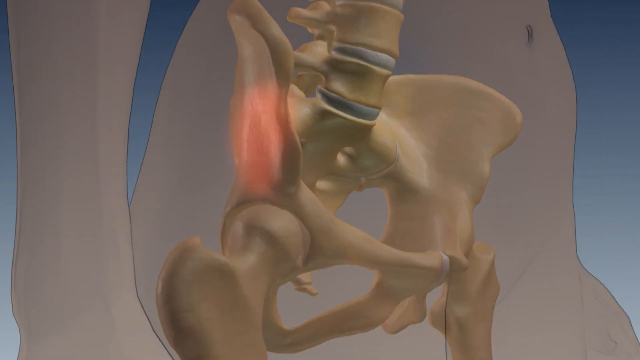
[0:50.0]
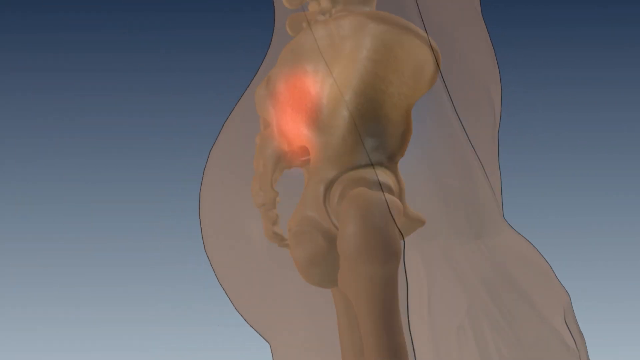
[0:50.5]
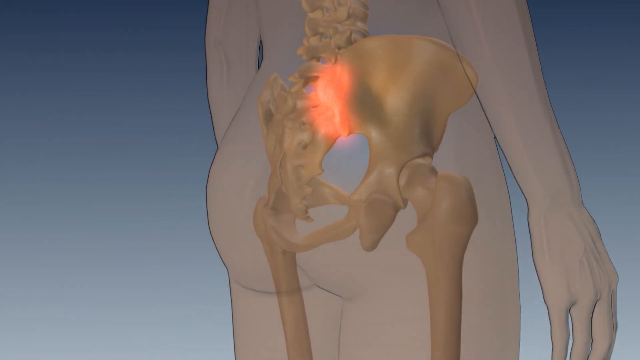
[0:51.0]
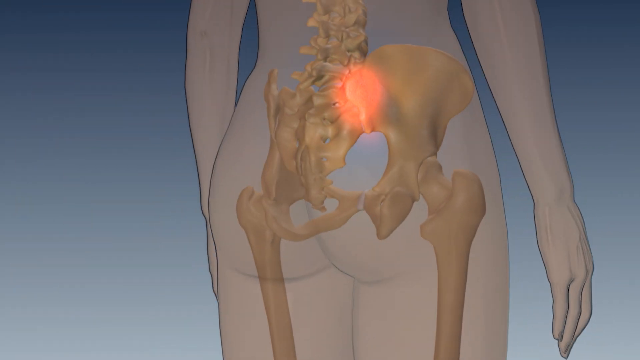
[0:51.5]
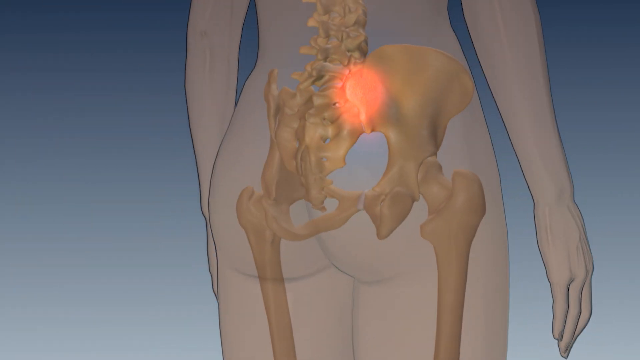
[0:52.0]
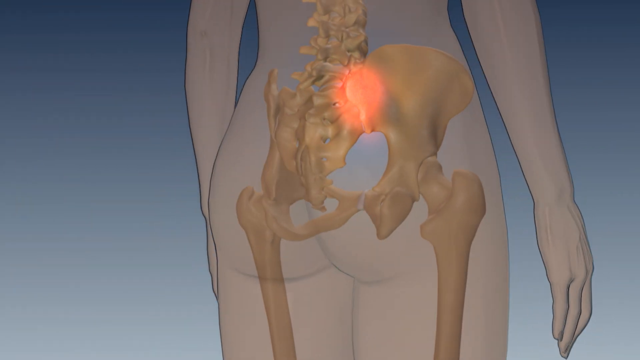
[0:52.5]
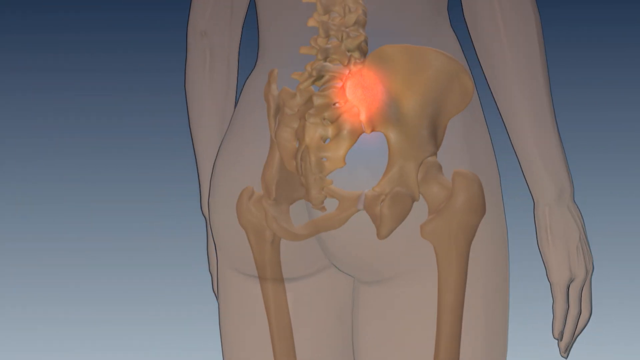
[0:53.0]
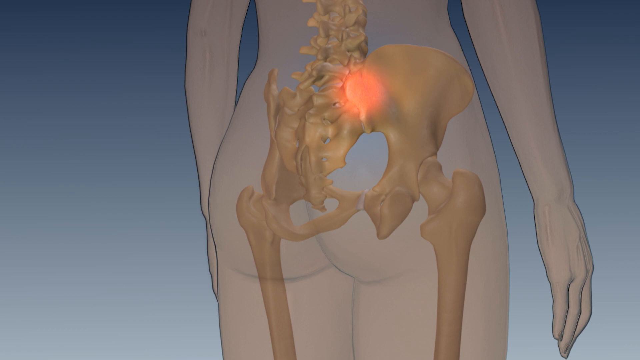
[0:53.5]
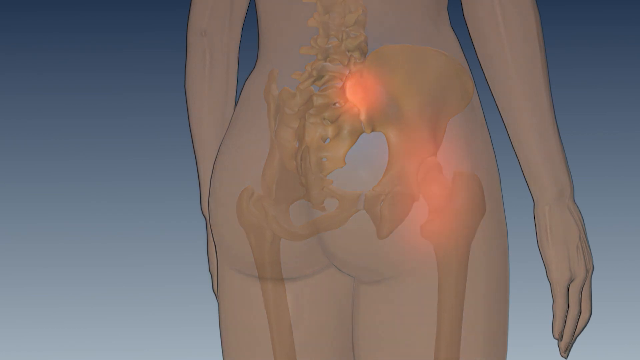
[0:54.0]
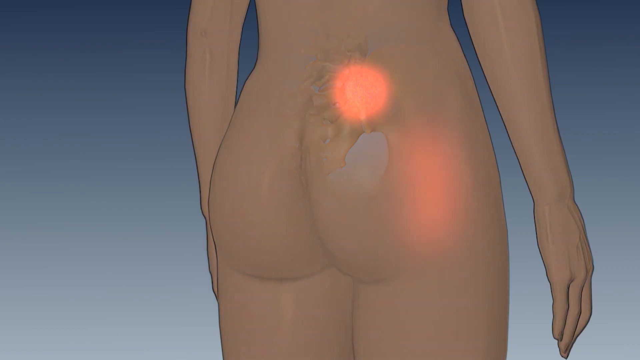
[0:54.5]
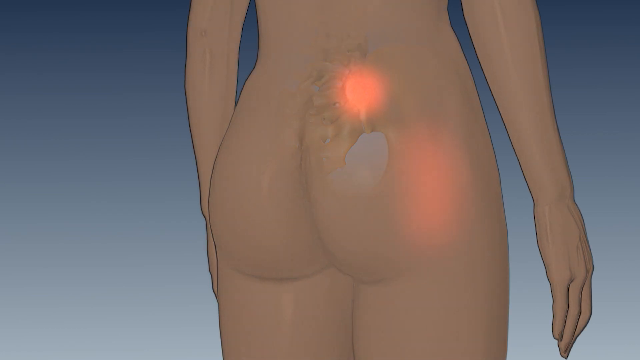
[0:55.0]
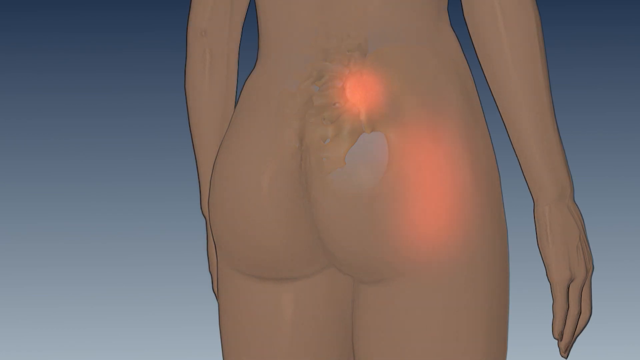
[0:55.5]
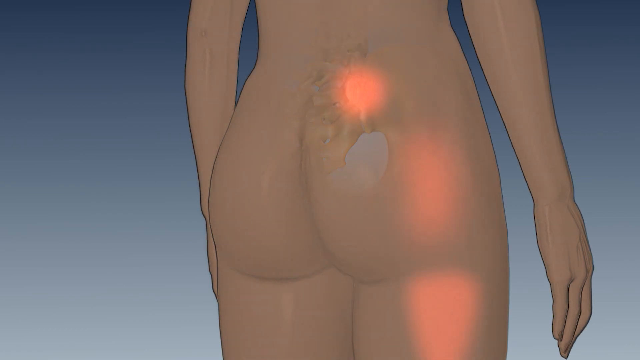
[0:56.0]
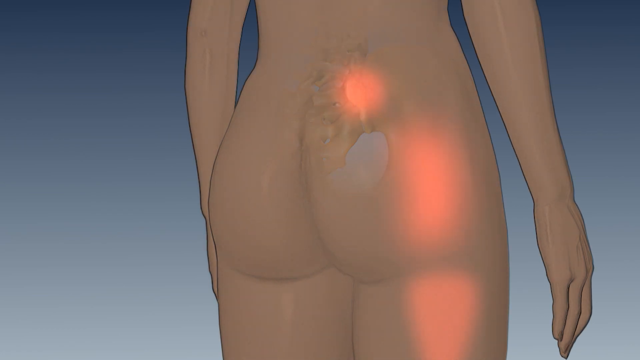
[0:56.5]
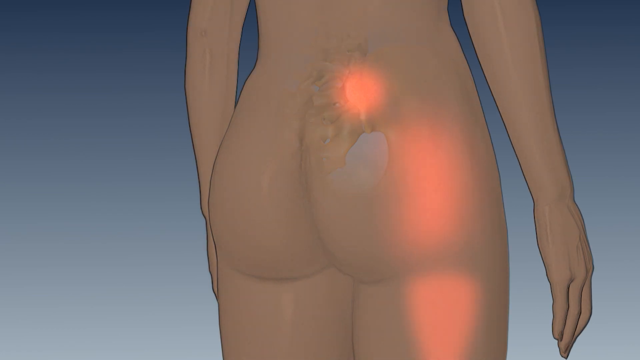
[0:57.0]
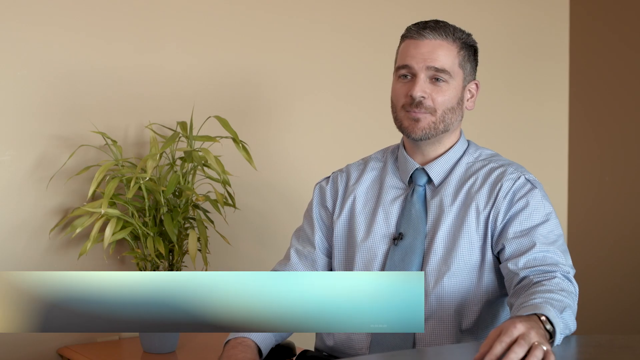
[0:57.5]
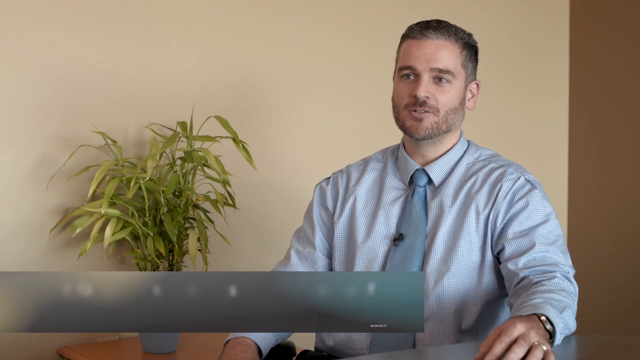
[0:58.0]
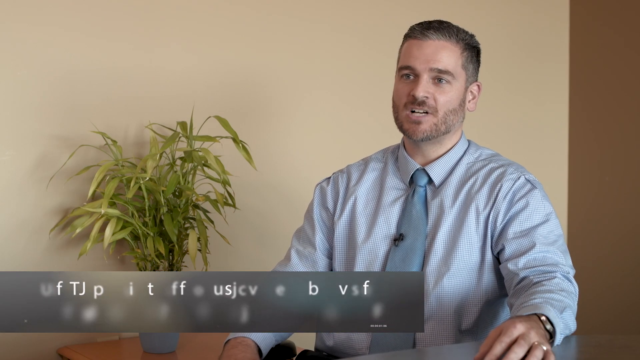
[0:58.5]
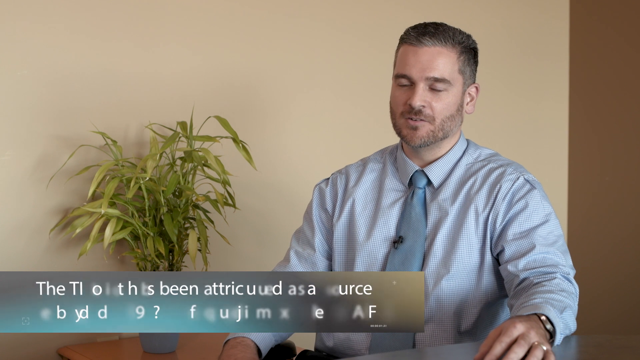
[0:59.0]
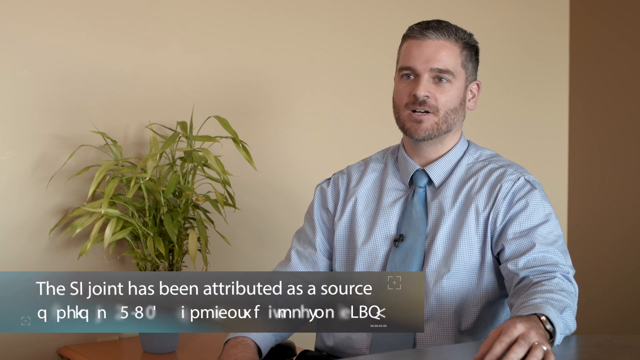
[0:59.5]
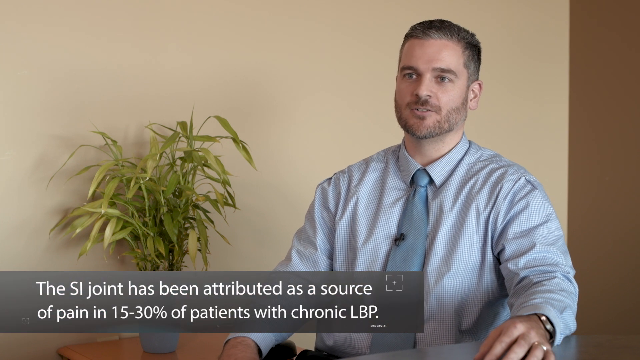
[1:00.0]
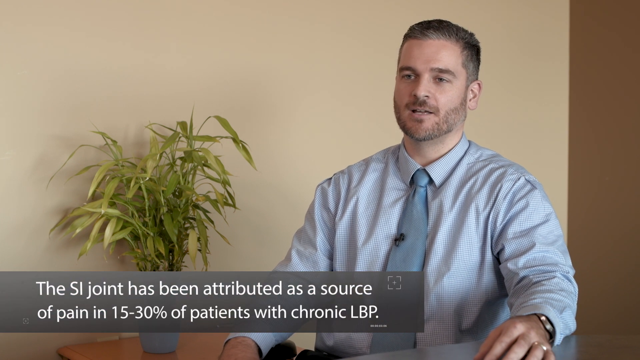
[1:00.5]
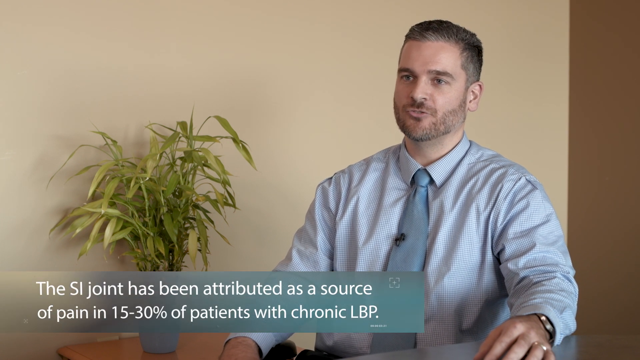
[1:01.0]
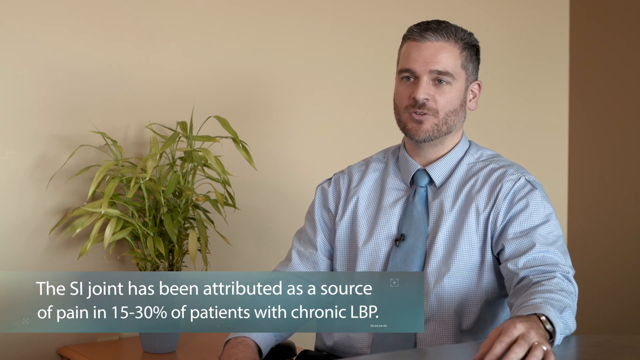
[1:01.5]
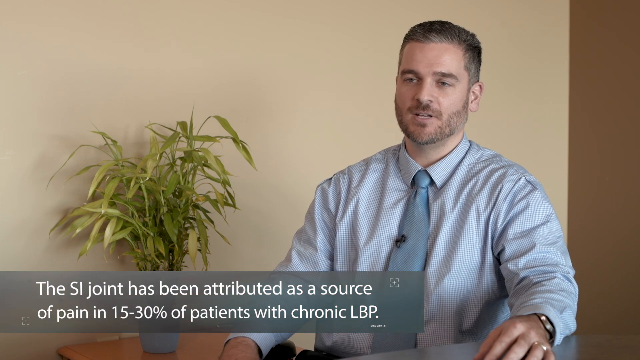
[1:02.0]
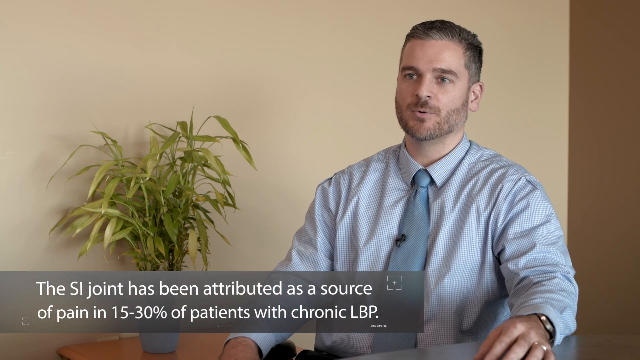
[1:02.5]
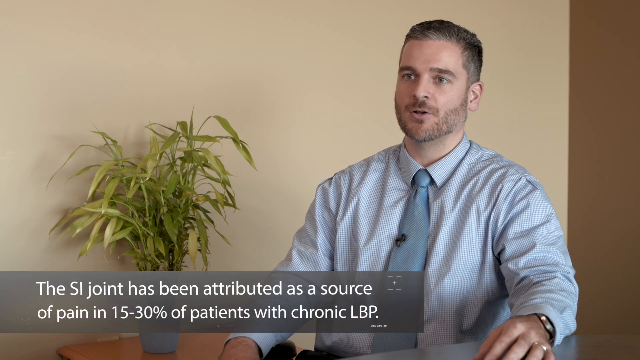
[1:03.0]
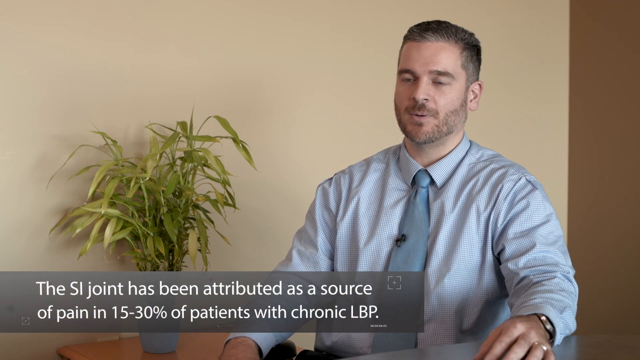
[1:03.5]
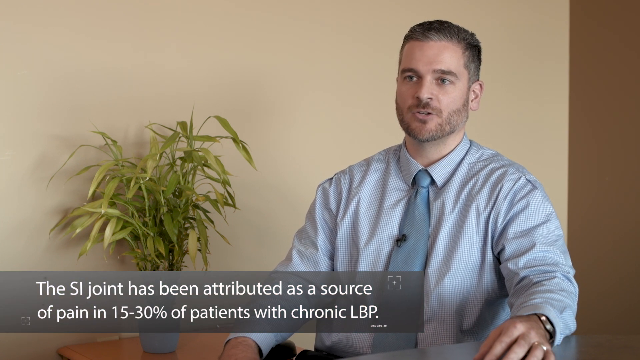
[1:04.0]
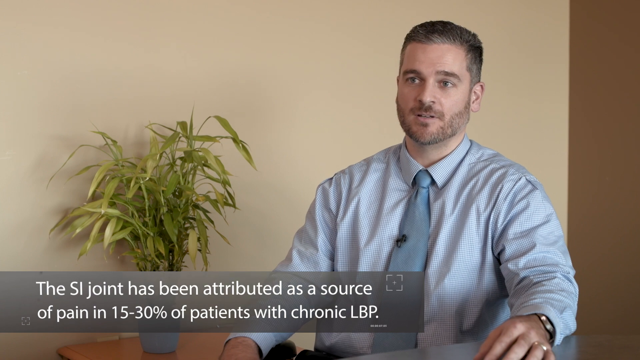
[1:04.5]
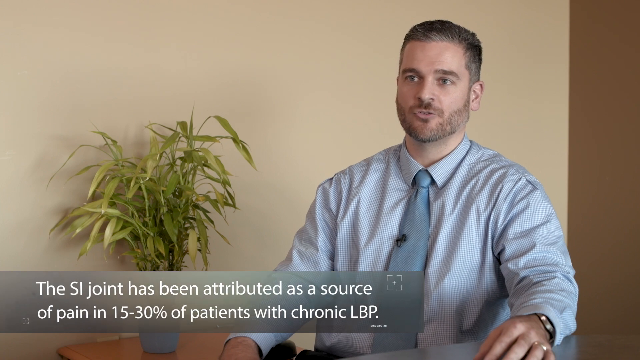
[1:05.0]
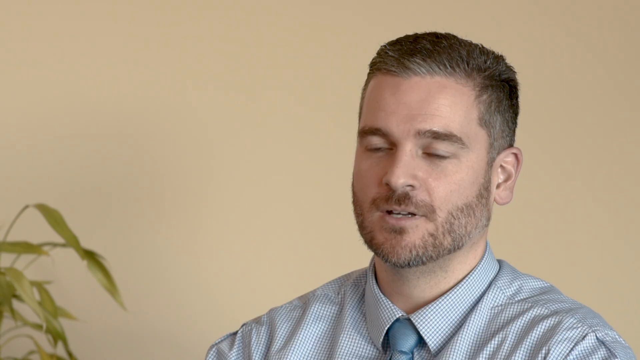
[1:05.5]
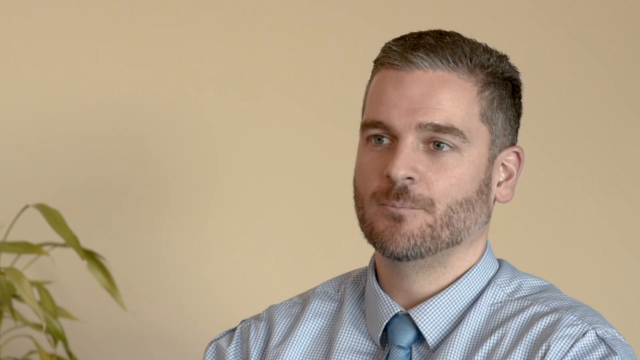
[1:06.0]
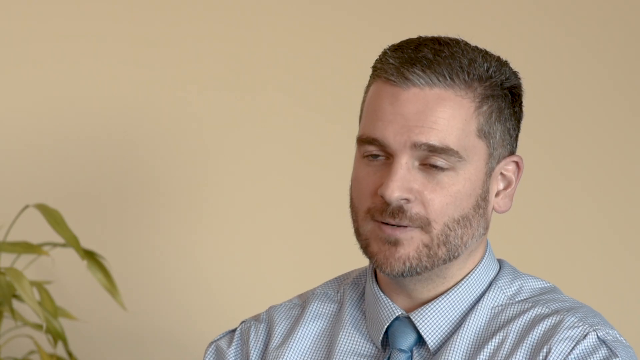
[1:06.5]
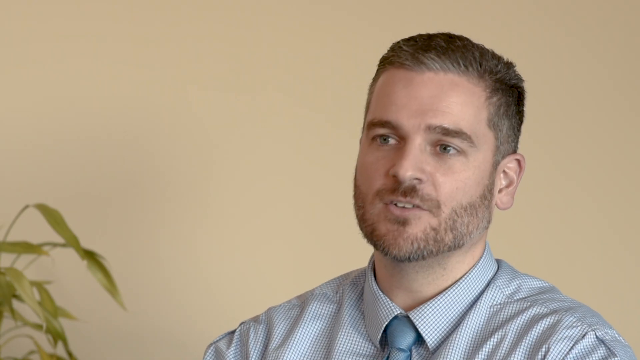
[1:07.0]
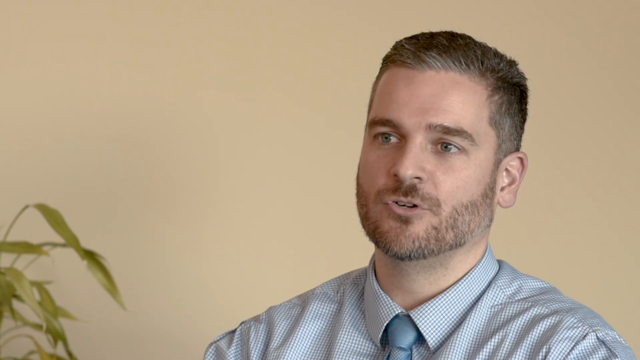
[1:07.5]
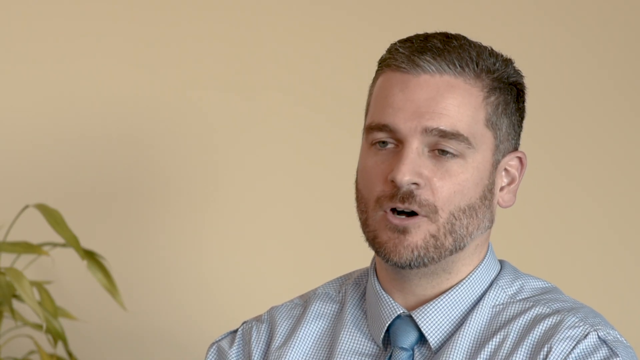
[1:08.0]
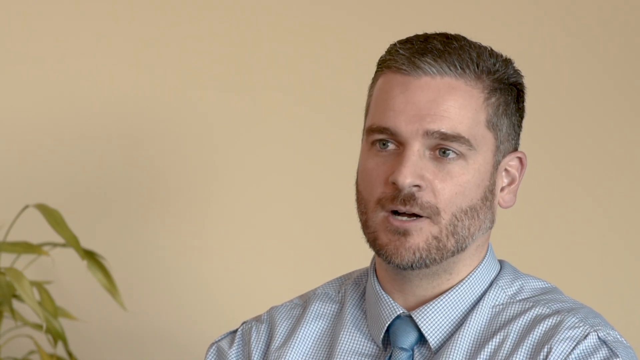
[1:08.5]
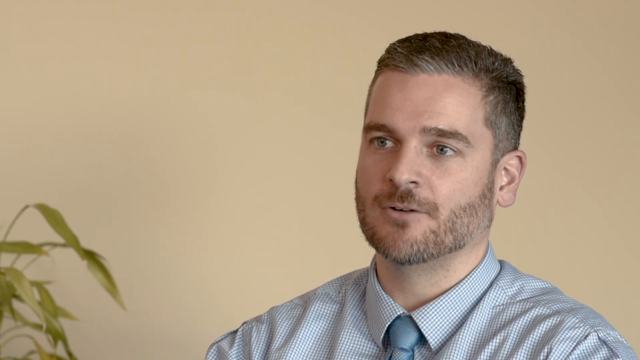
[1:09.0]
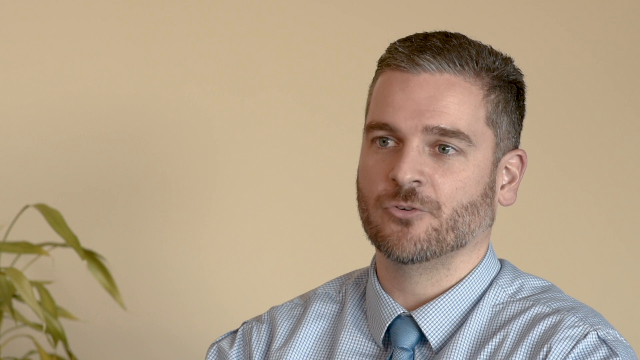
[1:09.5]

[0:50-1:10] While the person is still talking, the video shows the hip area in red on the left side, on an image of a person turned around so the target area is seen from behind. Two red areas appear, then three, apparently showing where pain can be. The video returns to the doctor speaking next to the green plant, and text in the lower left-hand corner reads "the SI joint has been attributed as a source of pain in 15% to 30% of patients with chronic LBP". The camera then zooms in on the doctor speaking.